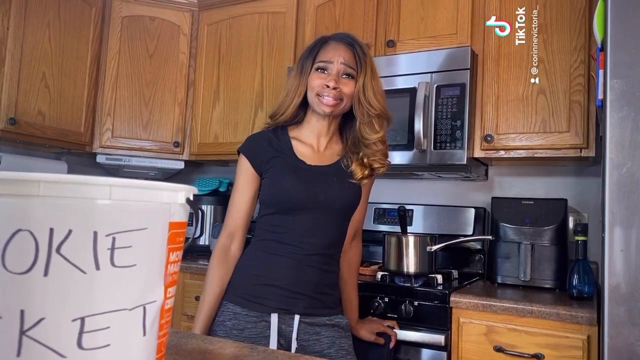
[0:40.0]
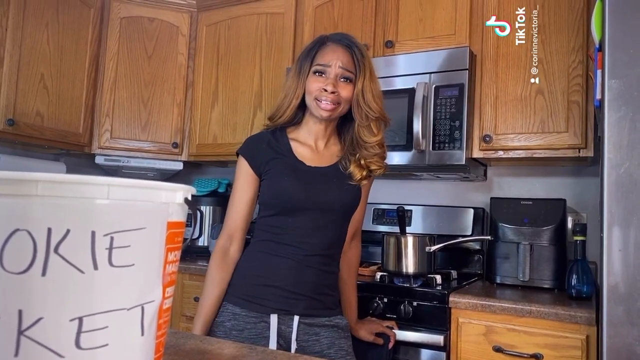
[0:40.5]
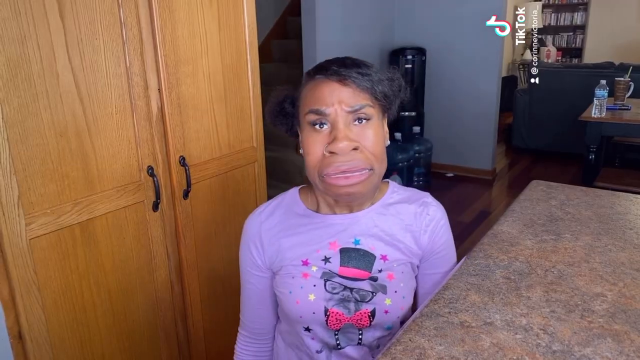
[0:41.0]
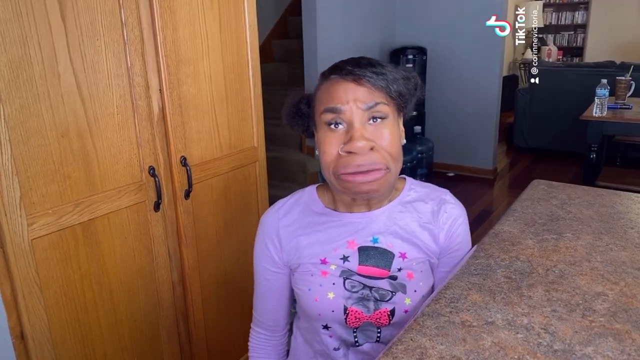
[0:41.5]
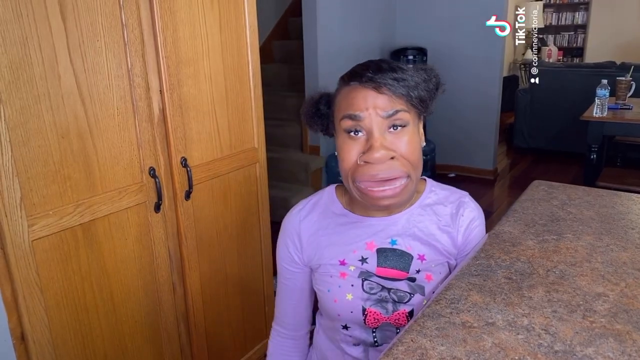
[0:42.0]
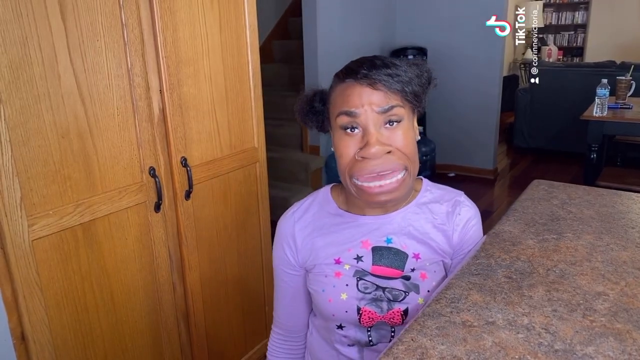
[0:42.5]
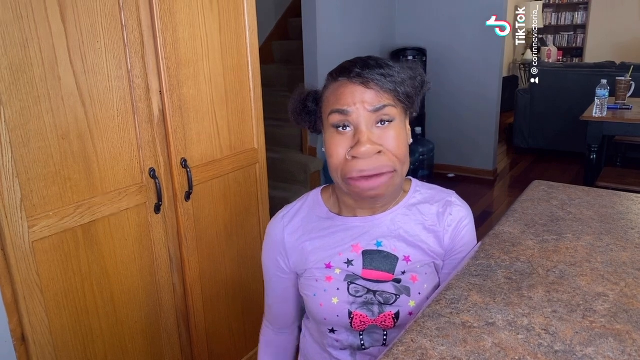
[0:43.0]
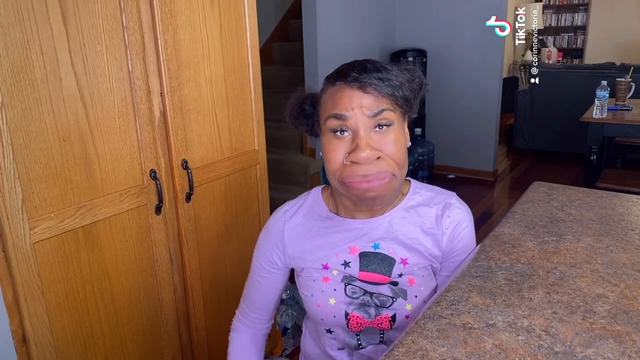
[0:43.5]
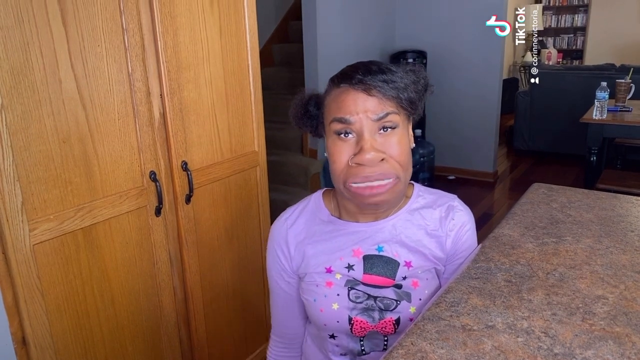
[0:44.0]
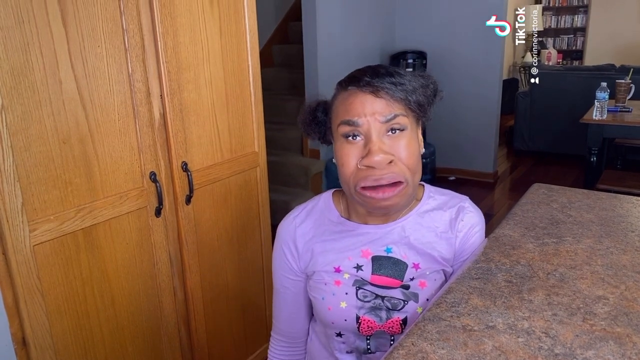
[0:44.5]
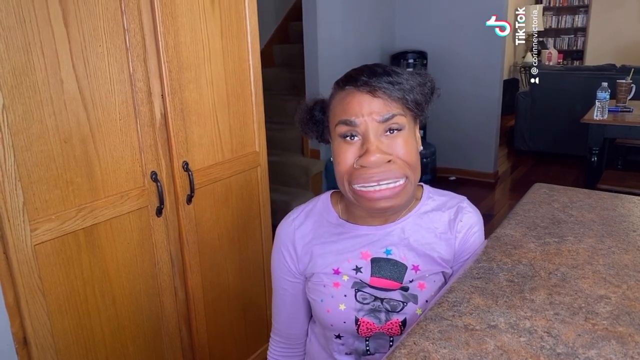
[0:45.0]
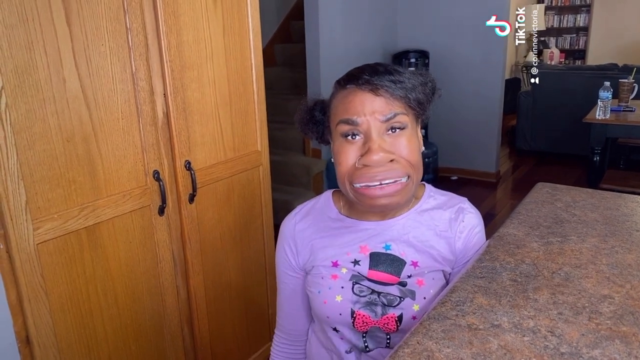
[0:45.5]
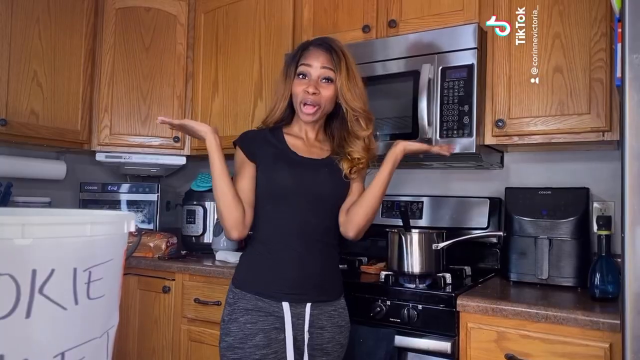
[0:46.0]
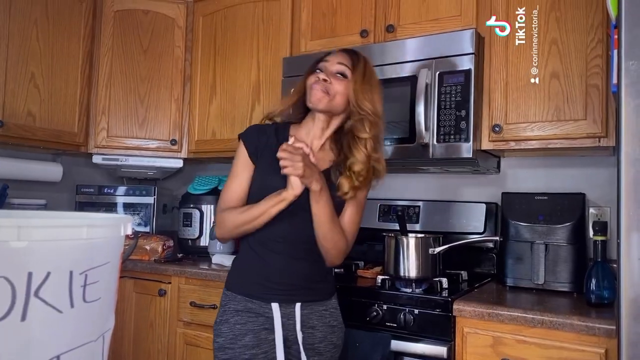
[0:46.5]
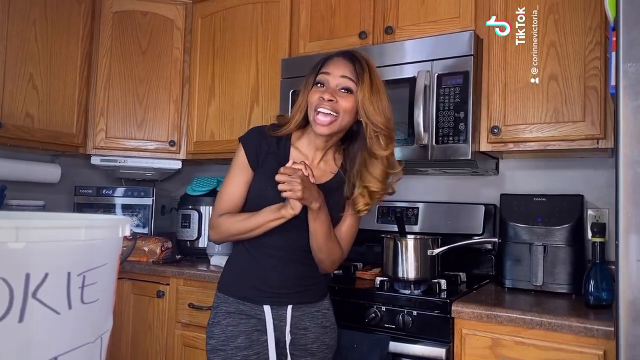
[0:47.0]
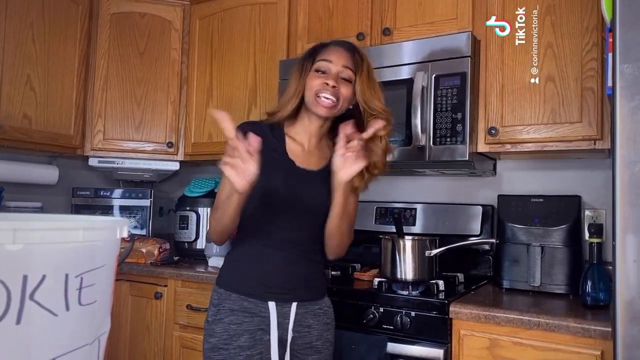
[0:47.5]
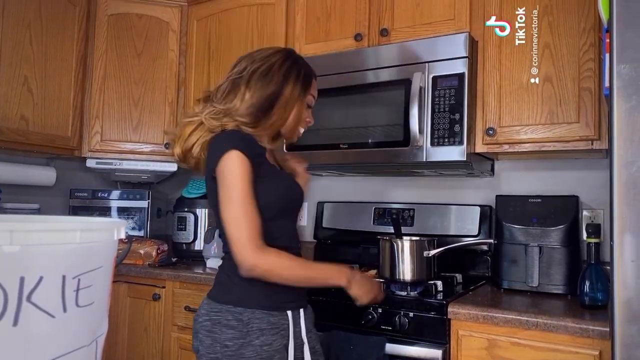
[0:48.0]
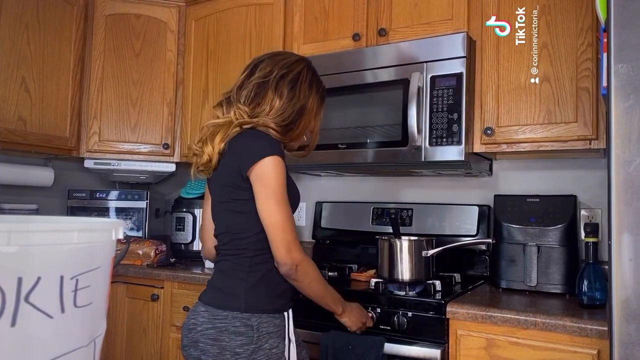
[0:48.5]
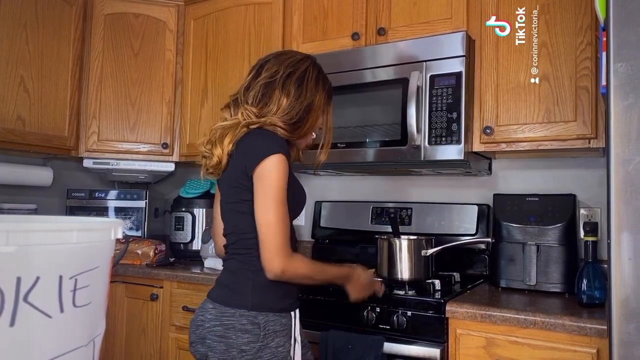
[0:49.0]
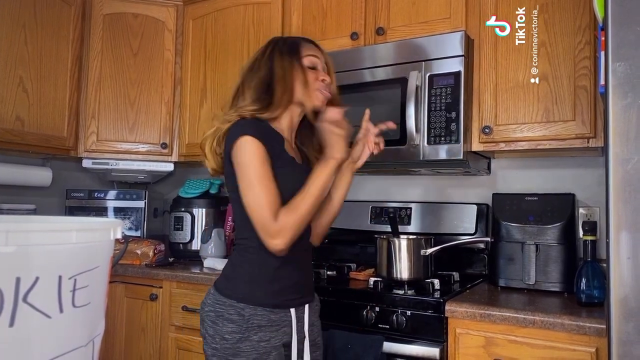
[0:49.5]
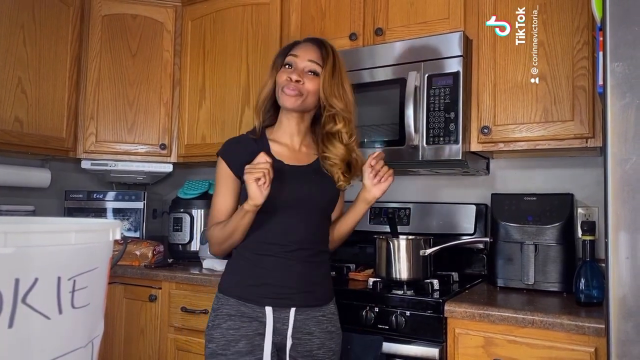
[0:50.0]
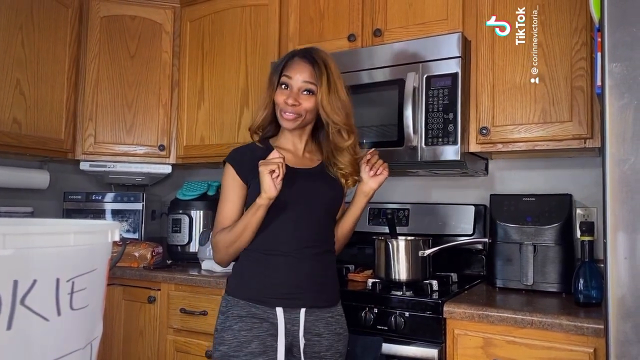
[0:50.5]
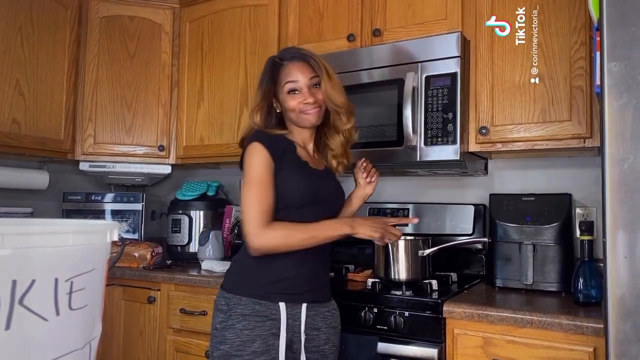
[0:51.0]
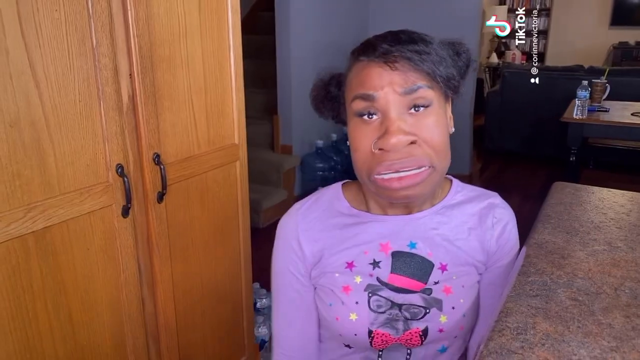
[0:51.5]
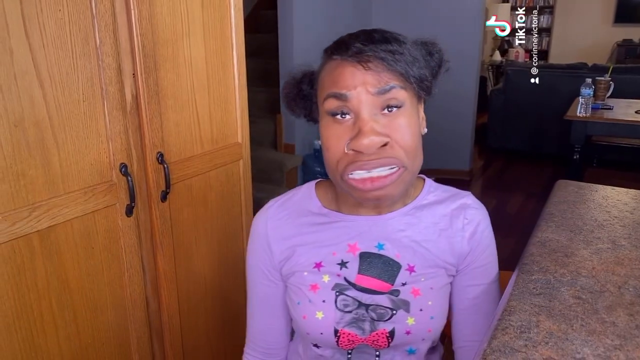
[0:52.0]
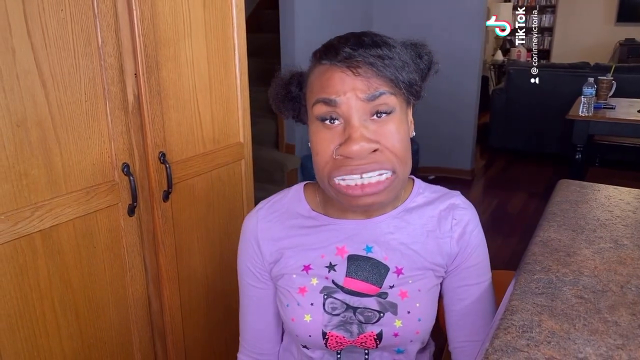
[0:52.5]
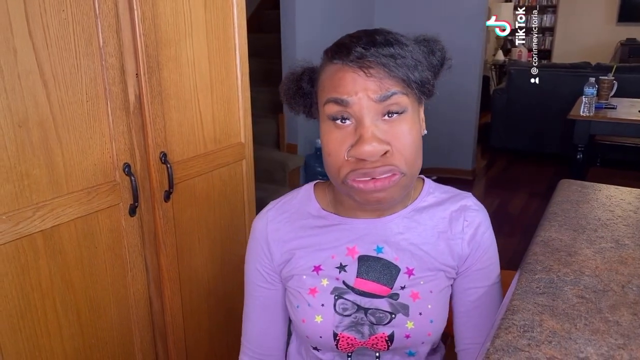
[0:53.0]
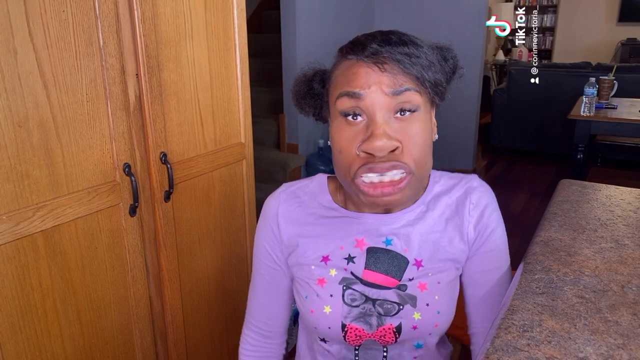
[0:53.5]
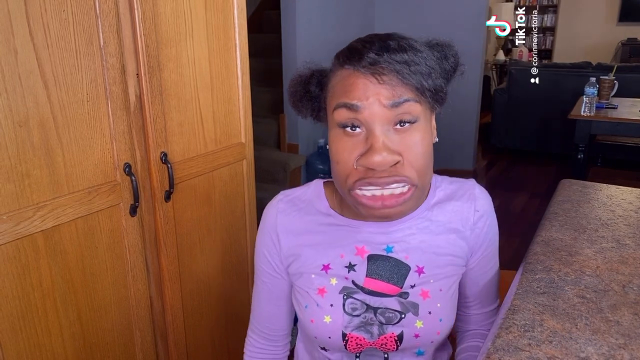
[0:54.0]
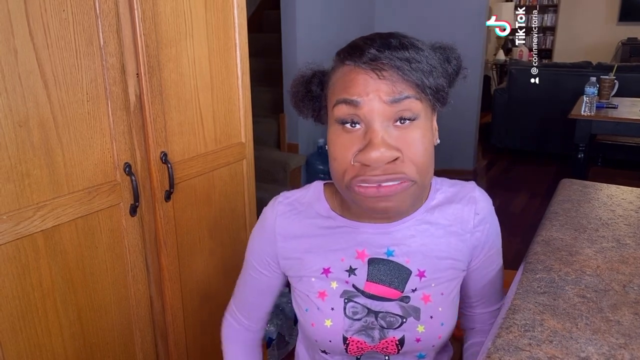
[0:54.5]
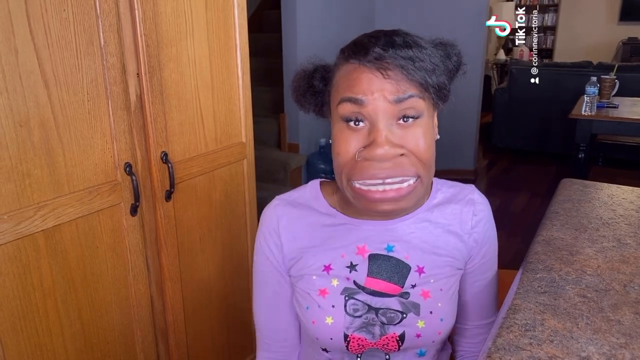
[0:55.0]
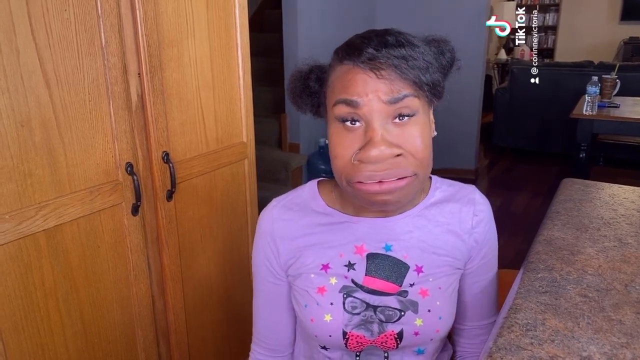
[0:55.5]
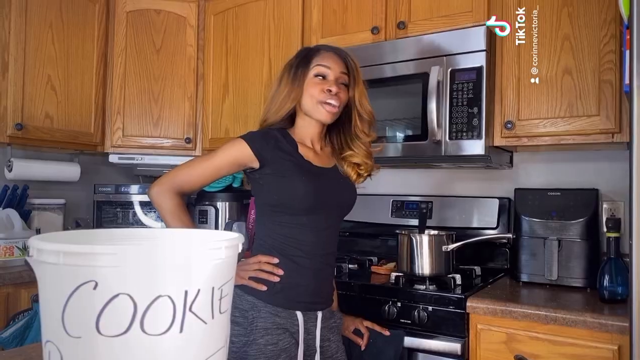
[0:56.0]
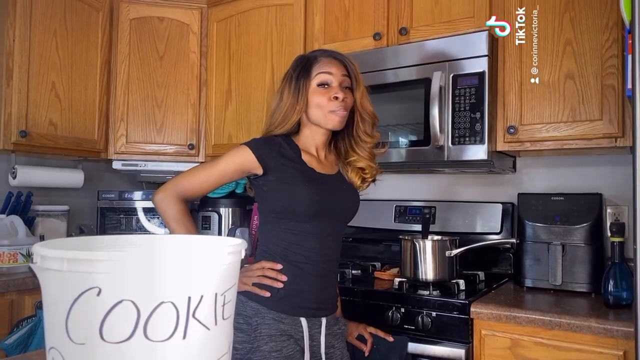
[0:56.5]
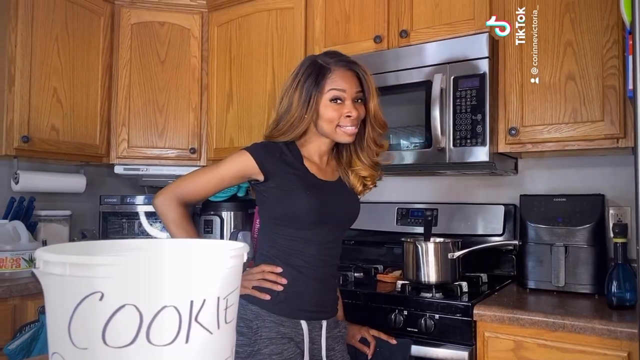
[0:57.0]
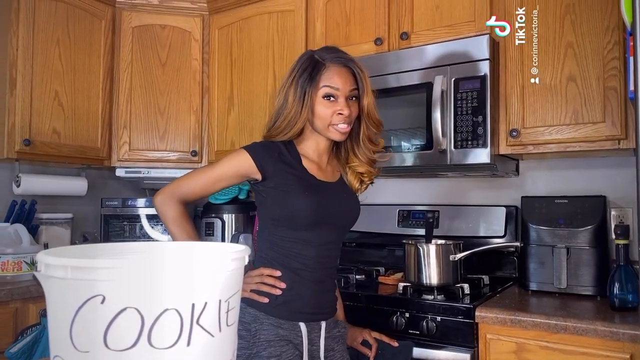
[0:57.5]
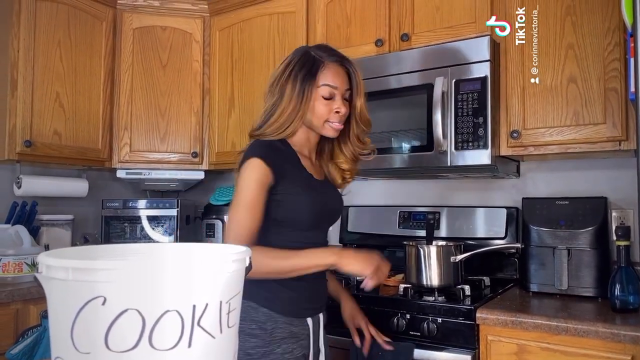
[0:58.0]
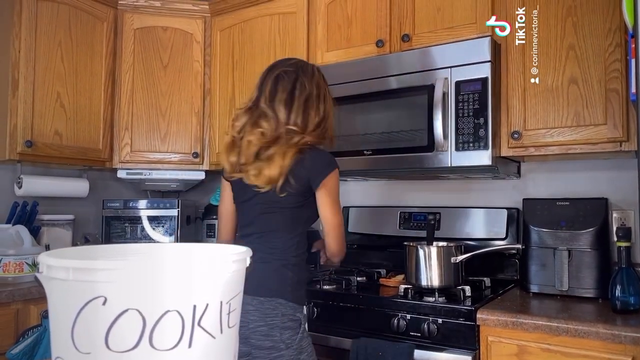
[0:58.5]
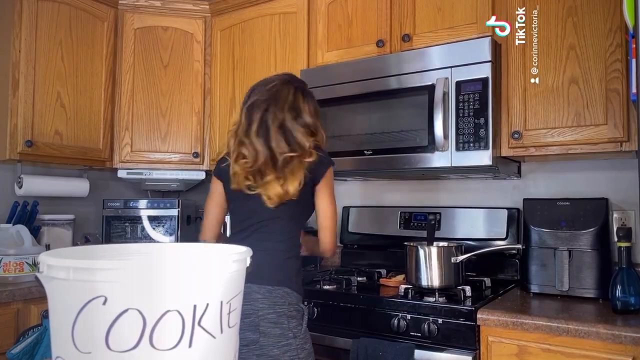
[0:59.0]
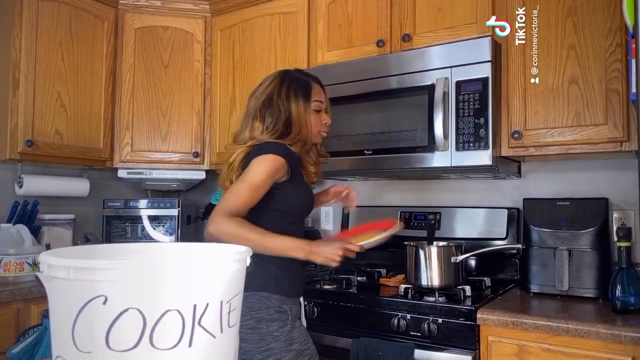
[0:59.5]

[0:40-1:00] The older woman in the black shirt and tight gray pants, with golden hair, stands there looking very upset at the little girl who is so set on eating the cookies. The woman says, "I have an idea. I'll turn this off. You won't have no food at all and we won't even have supper. We won't have supper and we won't have cookies. I'll show you I'm the boss. You can tell. Just look at me. I'm definitely the boss." She finishes by warning the girl that if she doesn't do what she's told, the punishment of cleaning the house will be much worse.